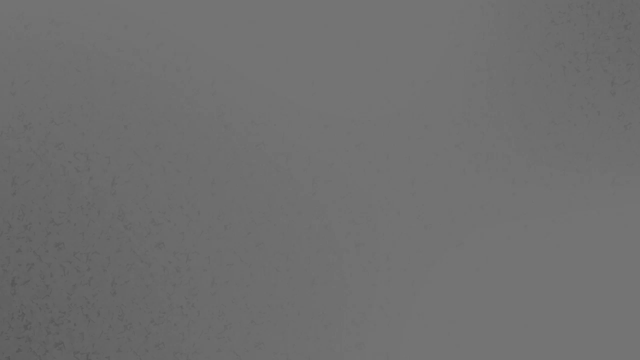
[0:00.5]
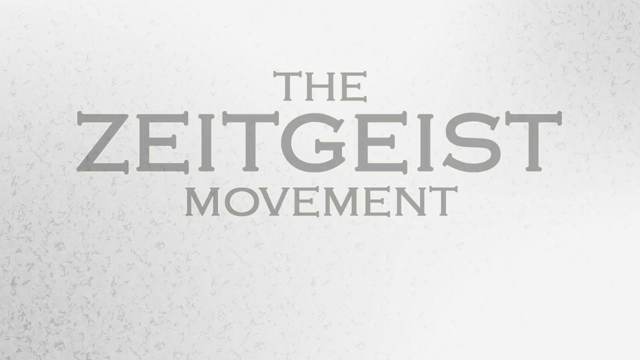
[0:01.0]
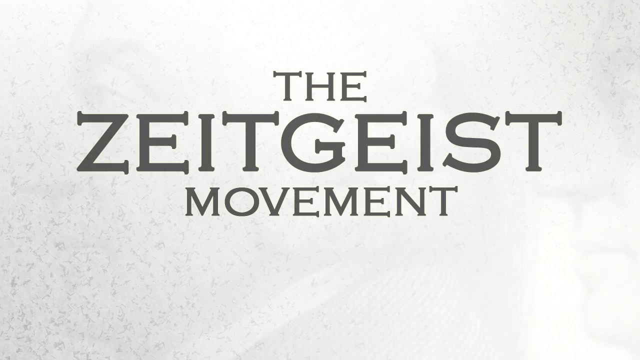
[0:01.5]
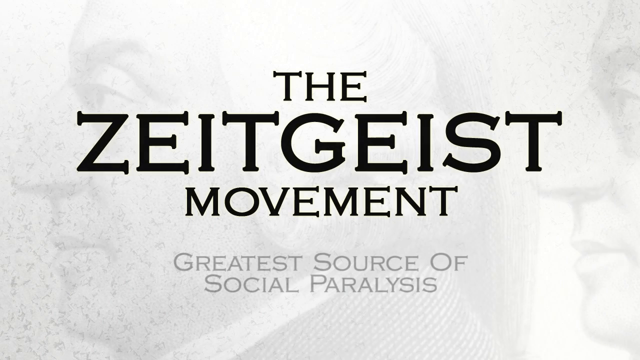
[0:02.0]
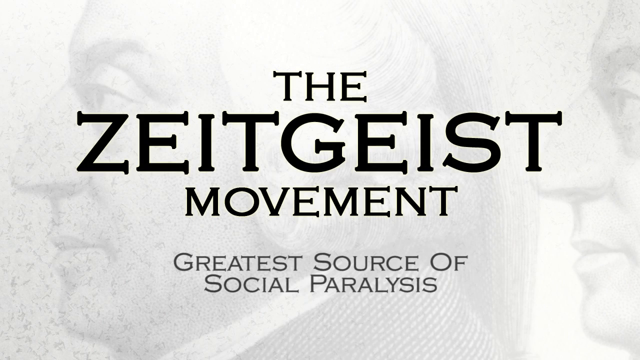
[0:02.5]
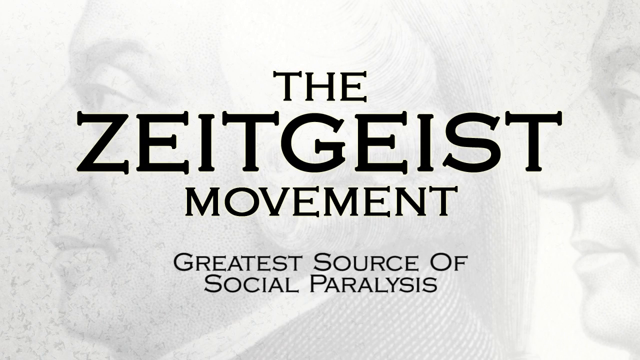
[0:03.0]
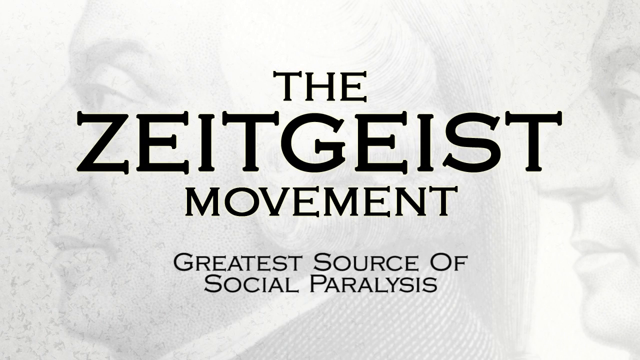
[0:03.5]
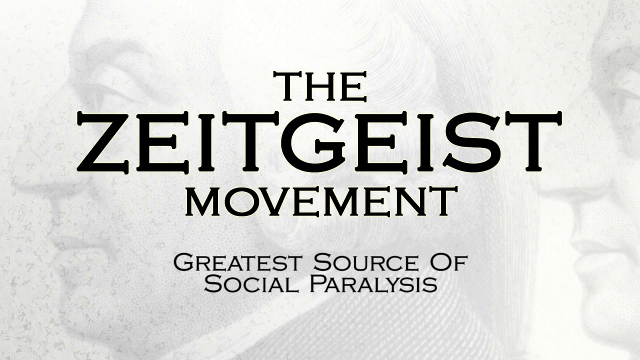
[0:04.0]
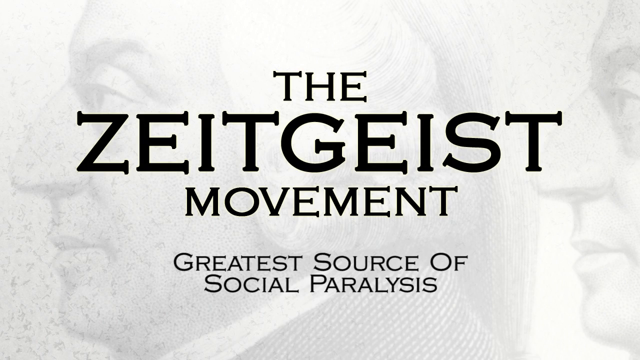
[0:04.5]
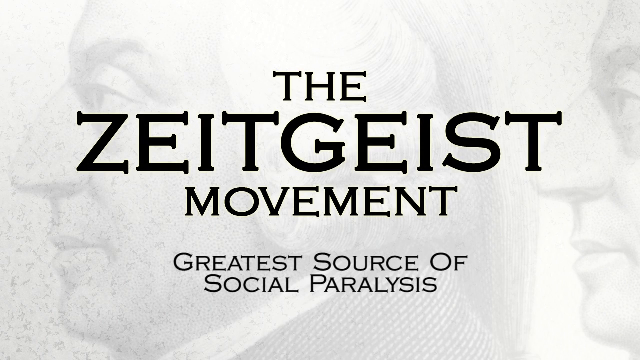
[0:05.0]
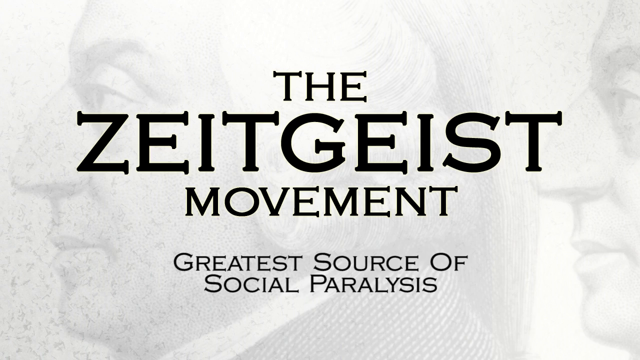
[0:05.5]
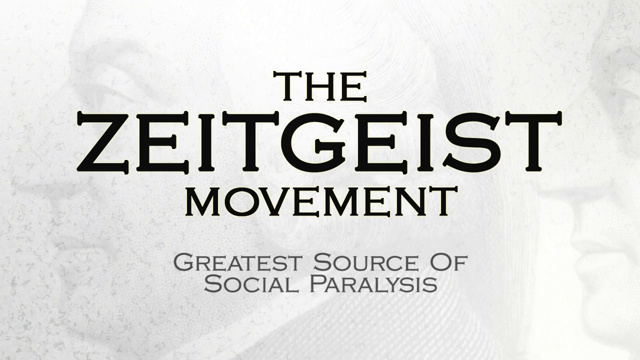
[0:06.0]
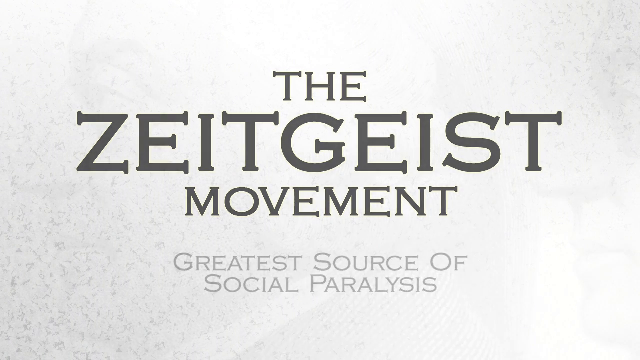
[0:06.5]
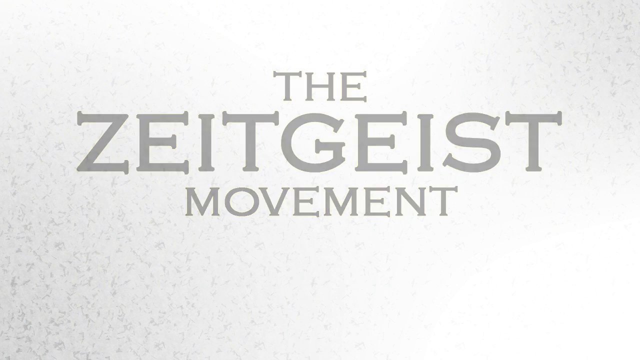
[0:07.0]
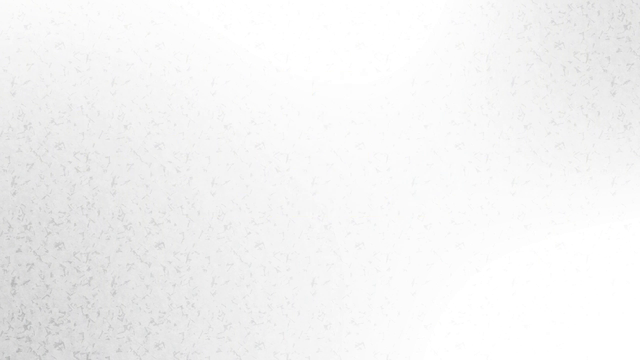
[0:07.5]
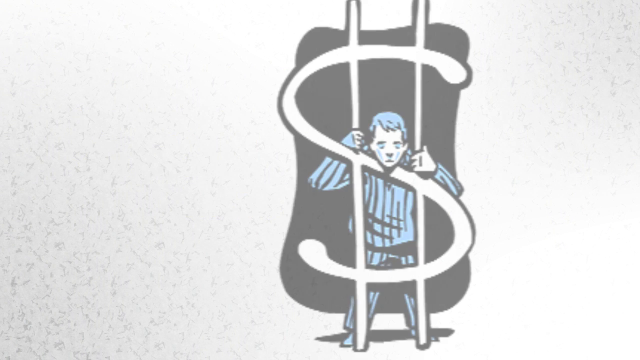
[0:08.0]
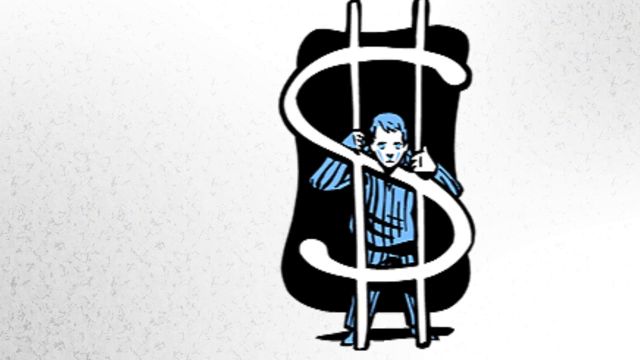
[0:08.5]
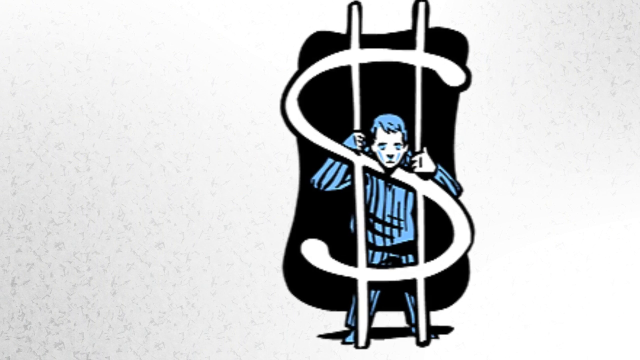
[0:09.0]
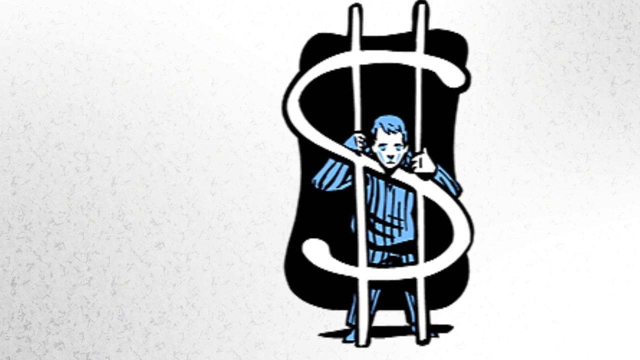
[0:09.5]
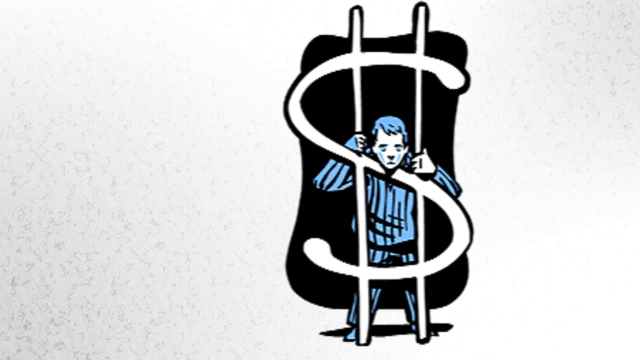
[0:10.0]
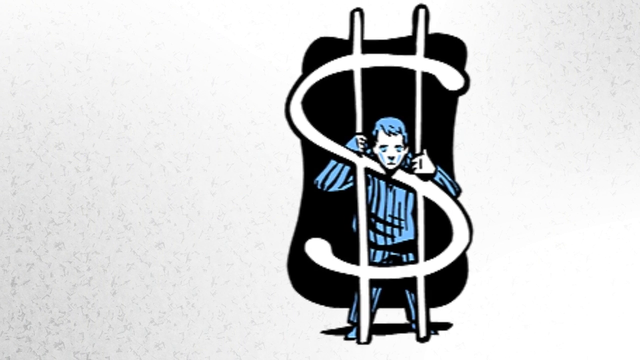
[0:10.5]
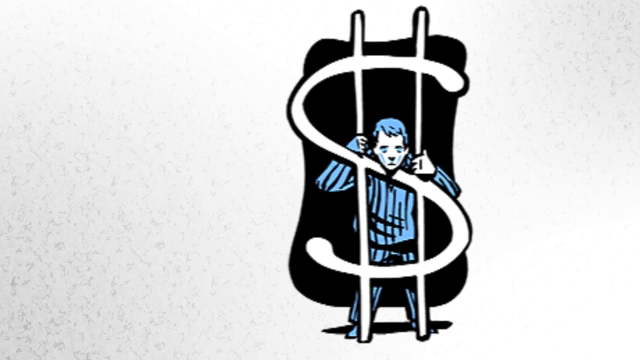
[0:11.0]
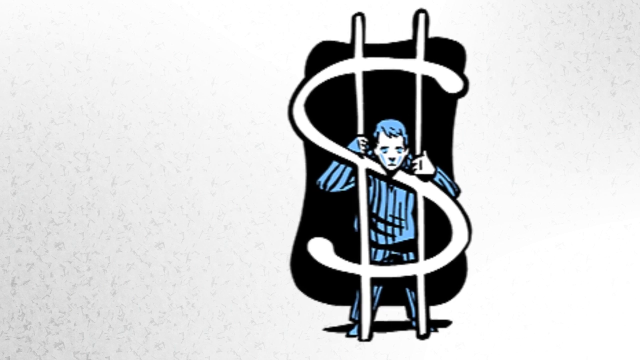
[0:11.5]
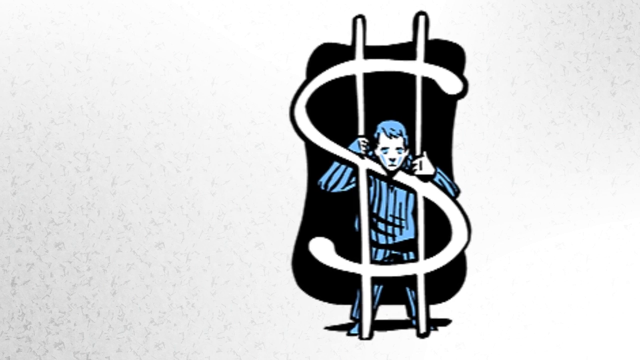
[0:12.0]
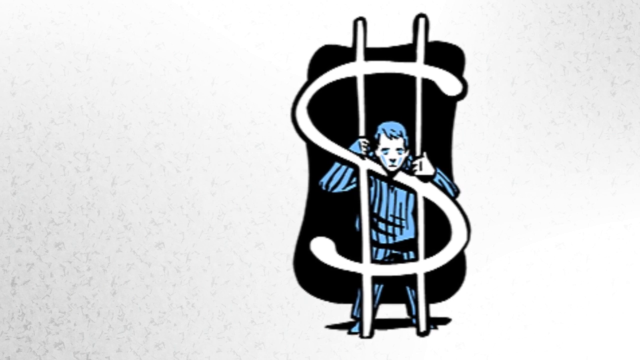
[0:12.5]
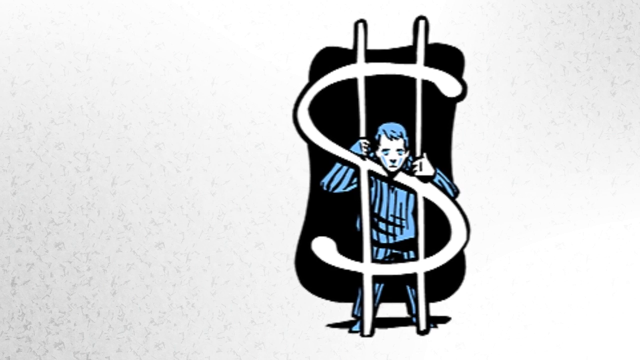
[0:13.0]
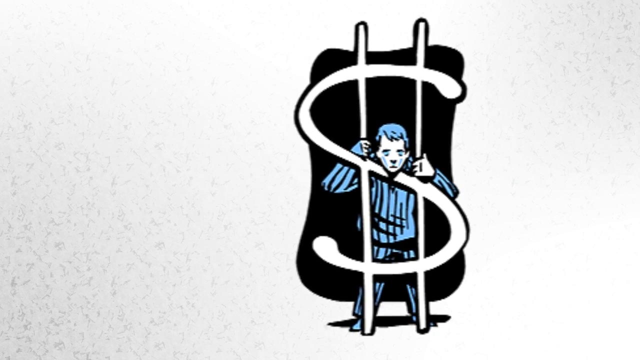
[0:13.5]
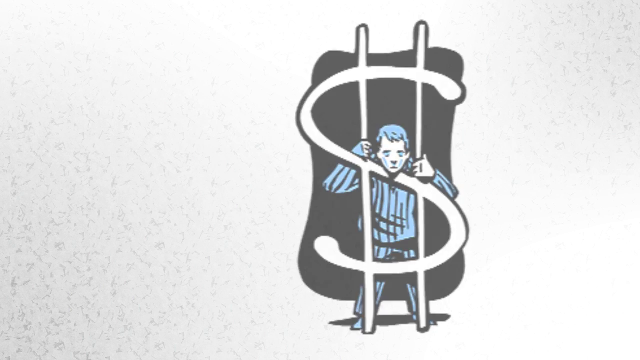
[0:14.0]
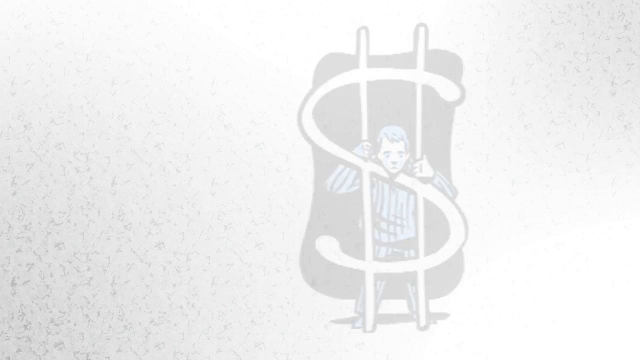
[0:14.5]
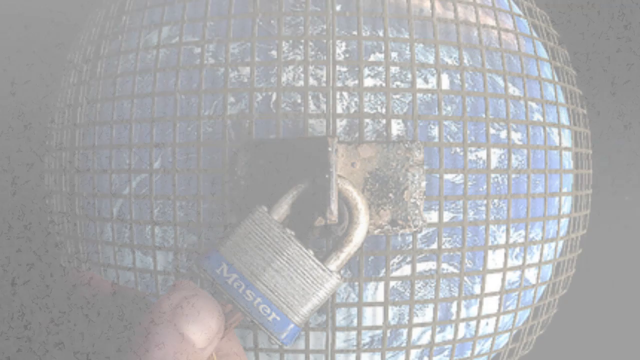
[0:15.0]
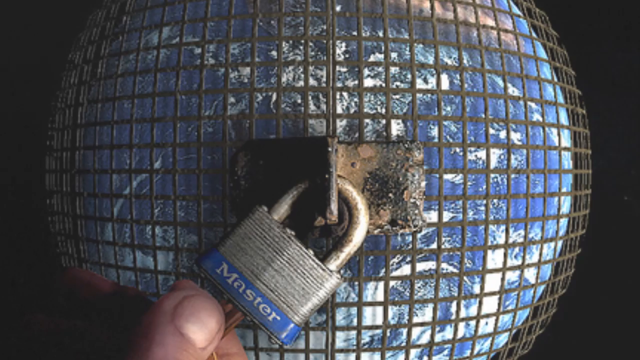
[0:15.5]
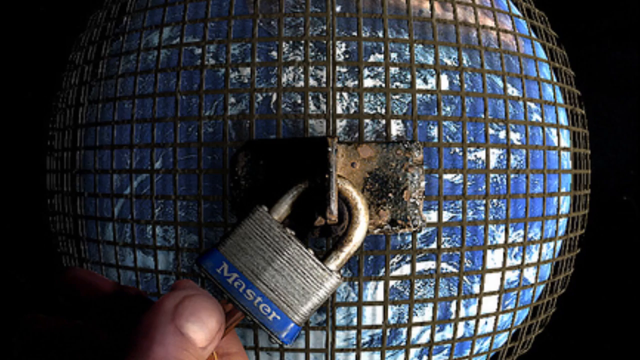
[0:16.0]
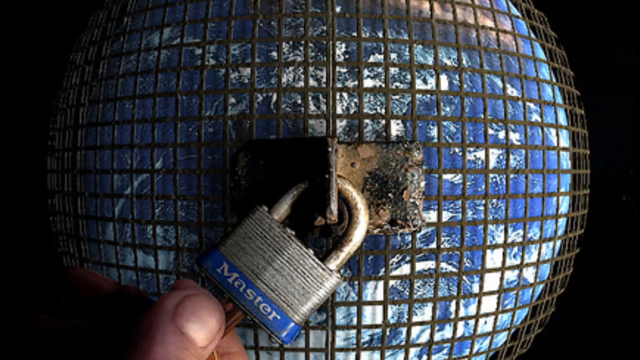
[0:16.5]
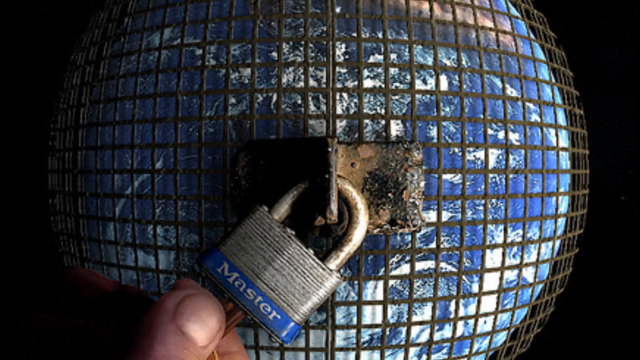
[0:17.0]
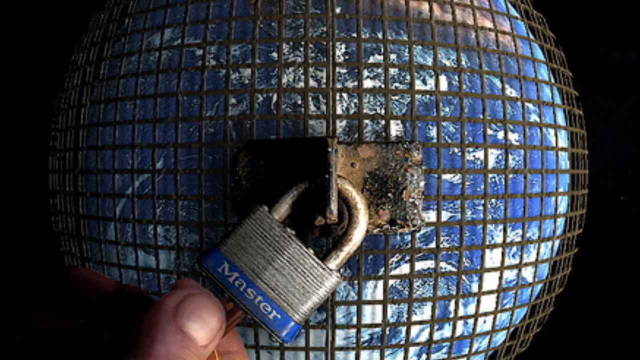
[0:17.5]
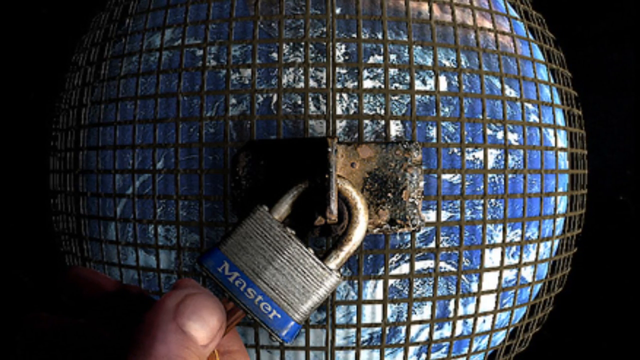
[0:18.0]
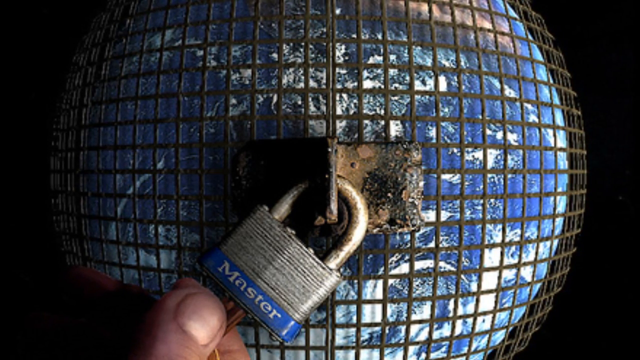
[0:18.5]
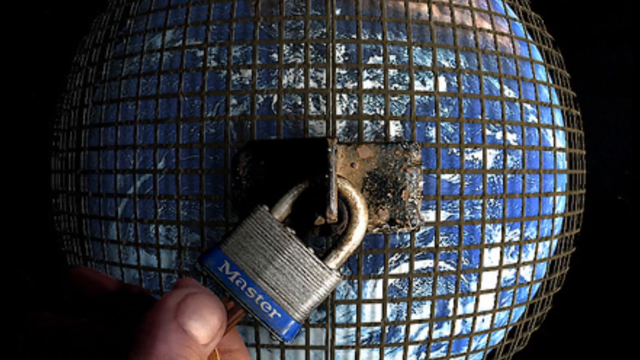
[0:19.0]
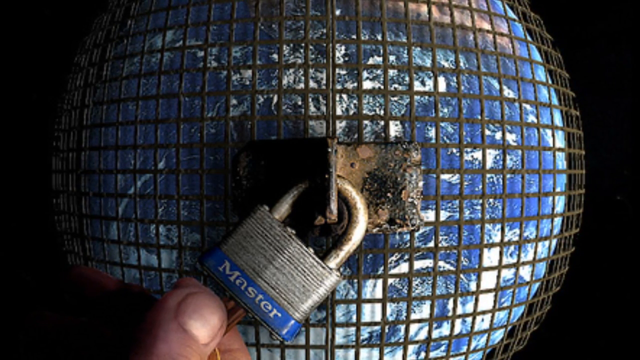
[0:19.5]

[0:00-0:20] The video opens with a title that reads "The Zeitgeist Movement, greatest source of social paralysis." Very faintly in the background are figures of men's faces, shown in profile, visible only on close inspection. Next comes a dollar sign with a character who looks like he is in jail: he holds onto the dollar sign, with his head looking out the top of it as if he is a prisoner. He wears a blue outfit and has blue hair. The world then appears, locked in behind a steel fence, with a very old lock locking up the fence around it.